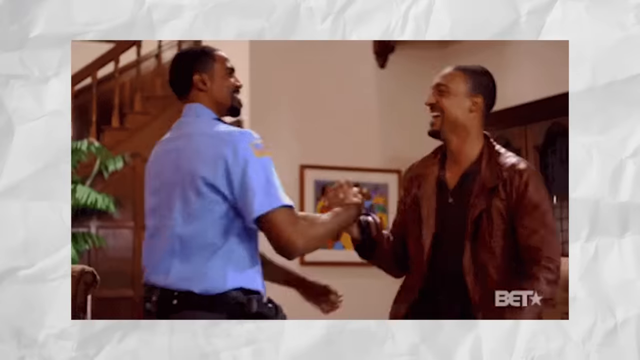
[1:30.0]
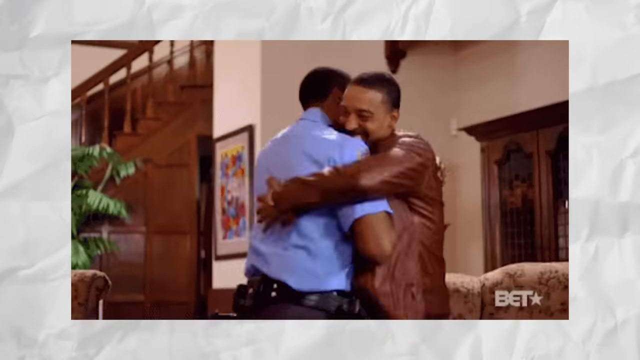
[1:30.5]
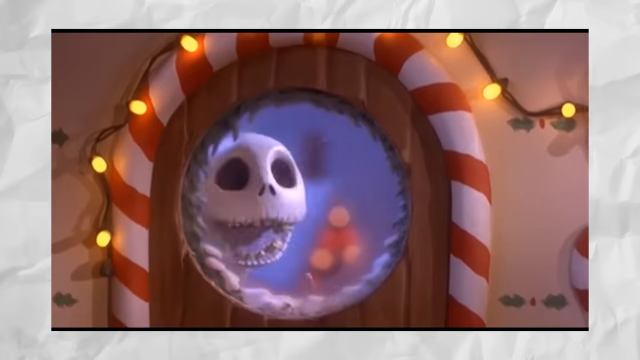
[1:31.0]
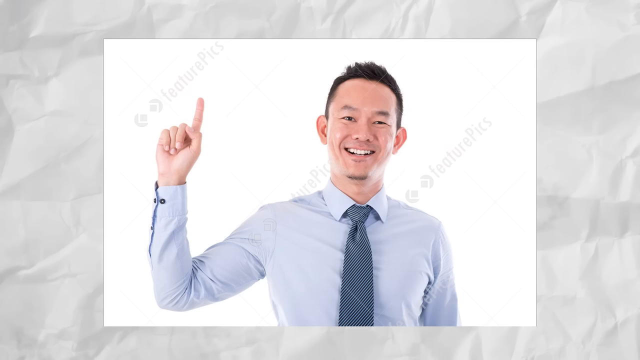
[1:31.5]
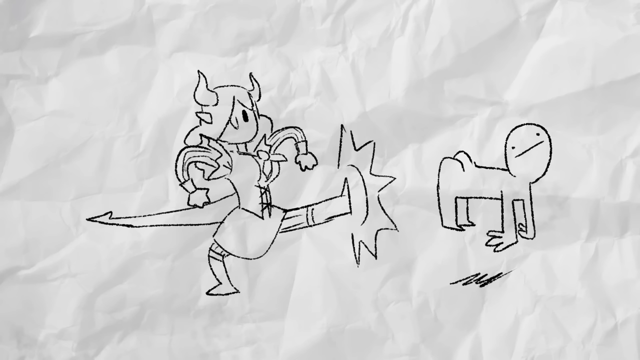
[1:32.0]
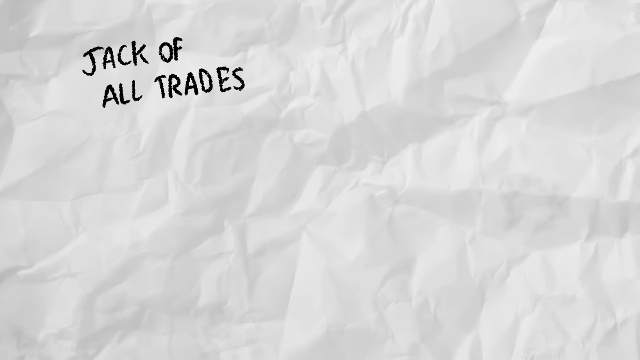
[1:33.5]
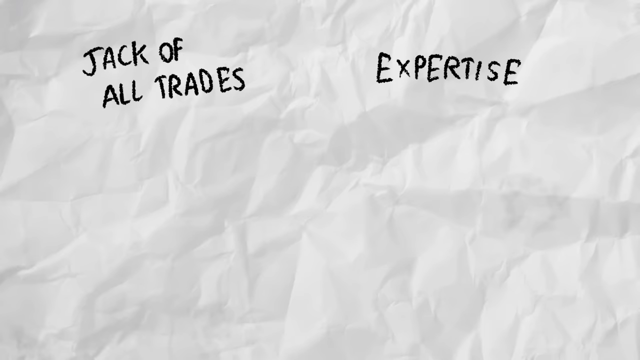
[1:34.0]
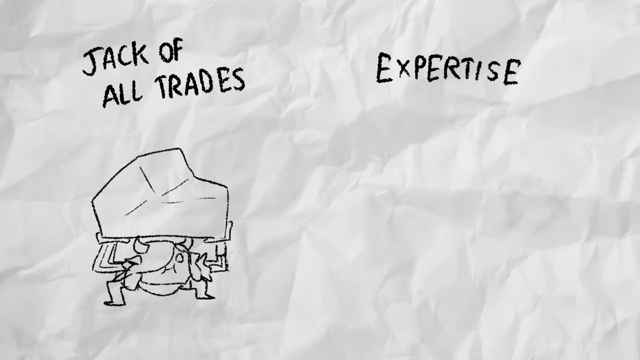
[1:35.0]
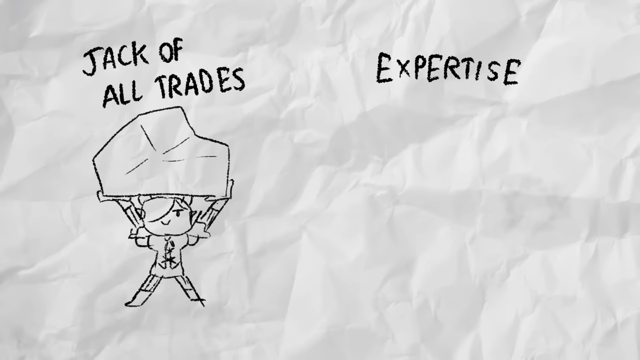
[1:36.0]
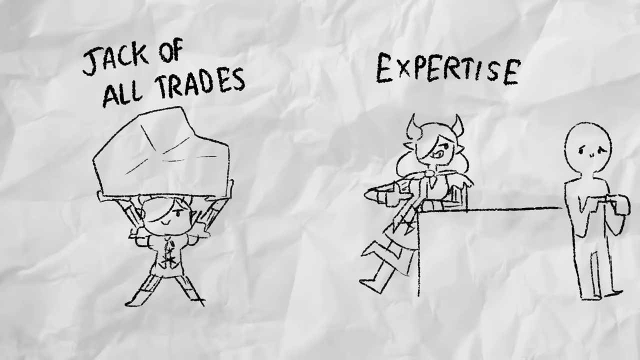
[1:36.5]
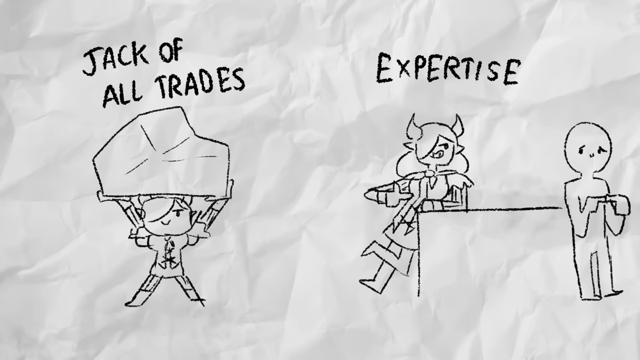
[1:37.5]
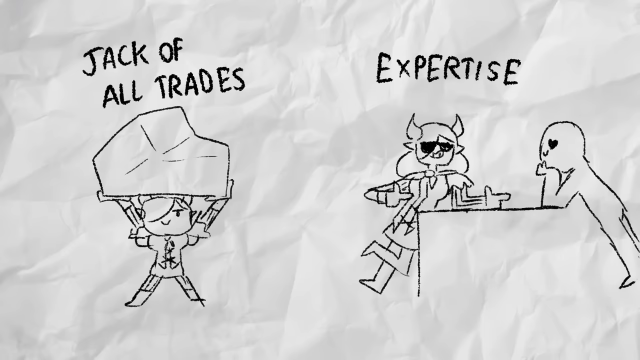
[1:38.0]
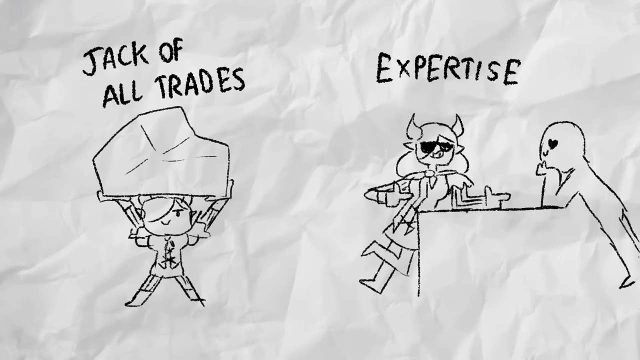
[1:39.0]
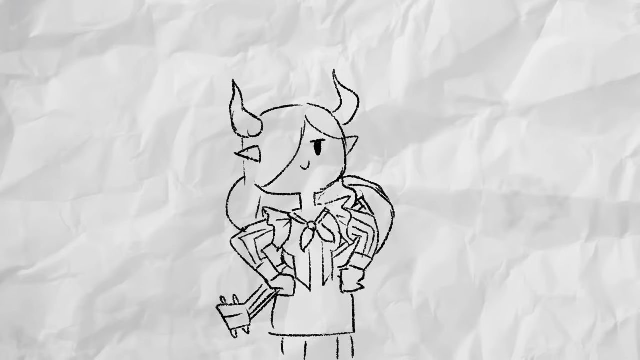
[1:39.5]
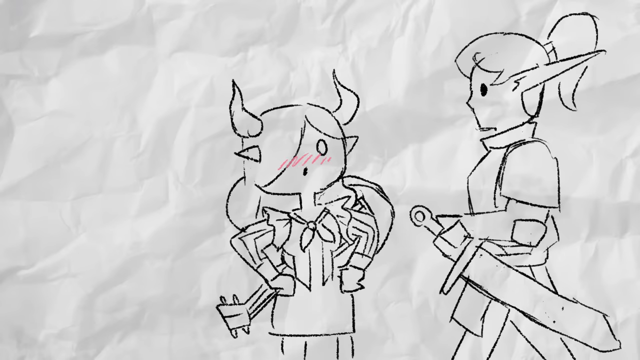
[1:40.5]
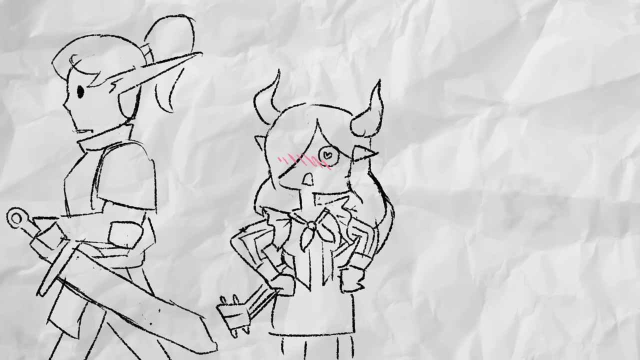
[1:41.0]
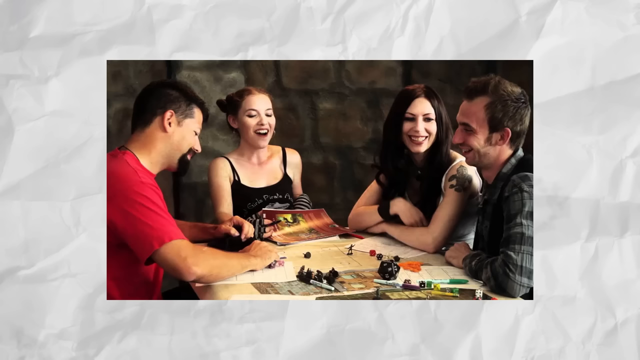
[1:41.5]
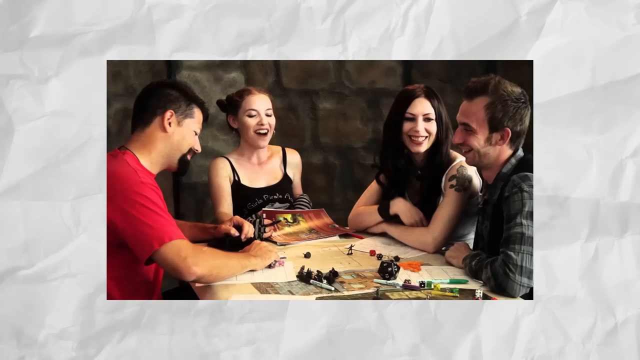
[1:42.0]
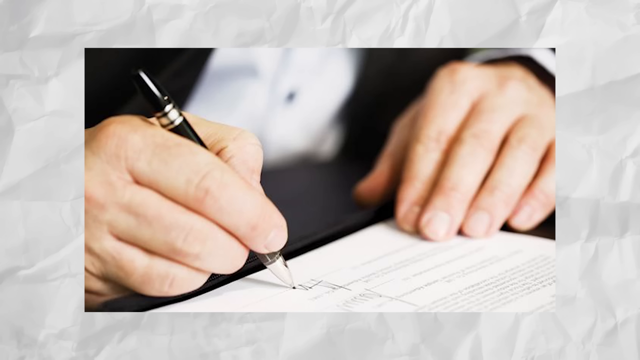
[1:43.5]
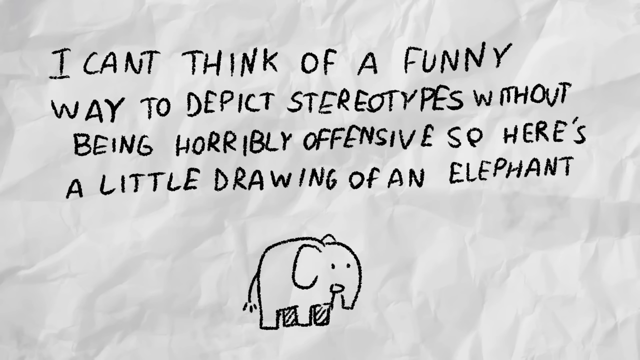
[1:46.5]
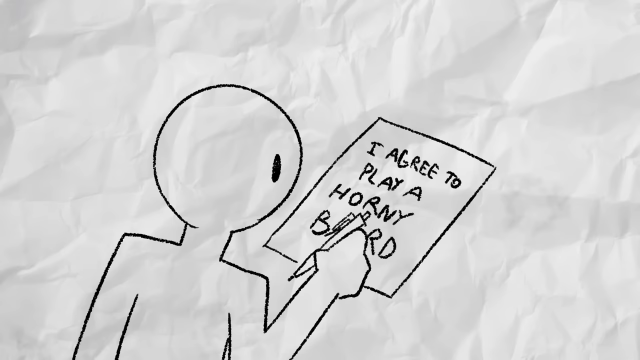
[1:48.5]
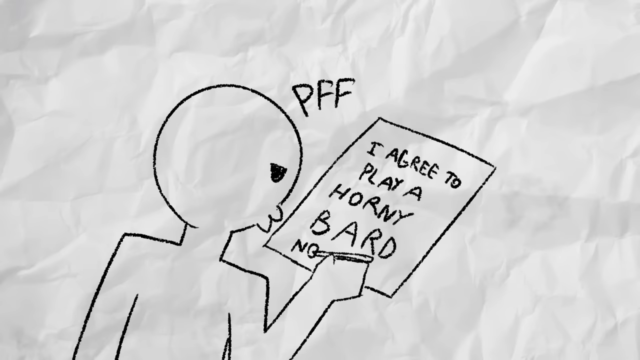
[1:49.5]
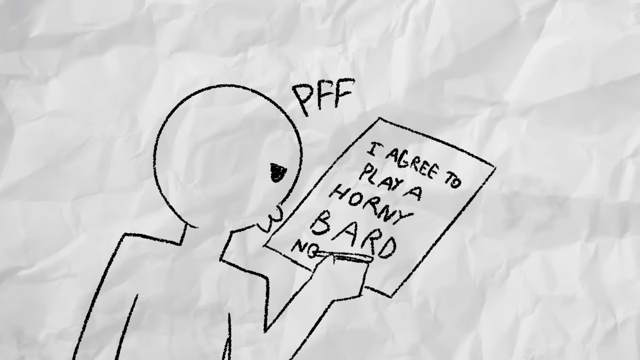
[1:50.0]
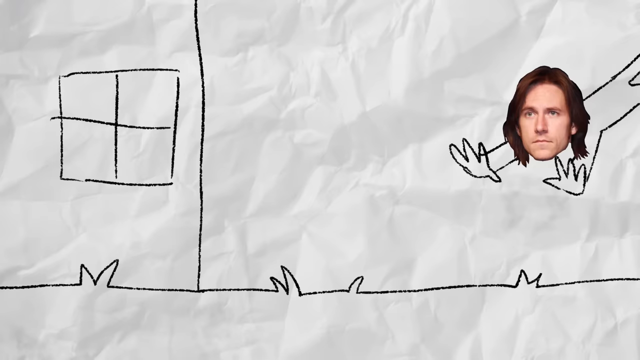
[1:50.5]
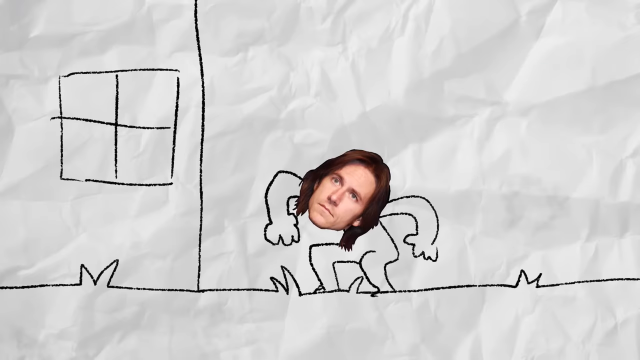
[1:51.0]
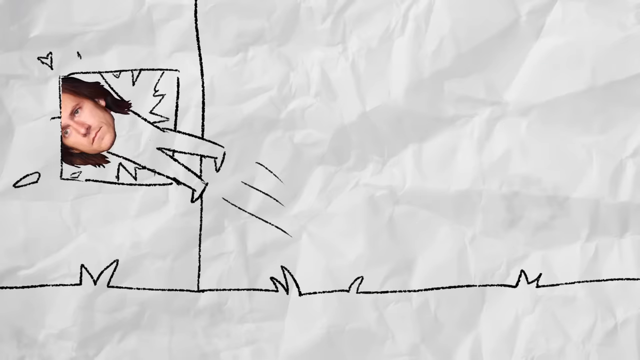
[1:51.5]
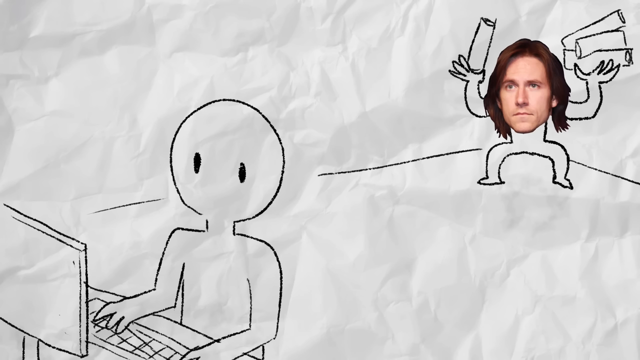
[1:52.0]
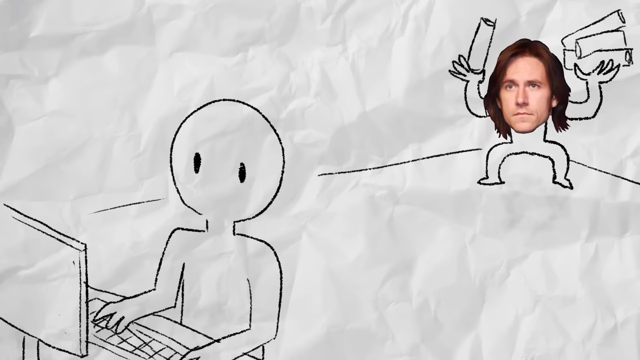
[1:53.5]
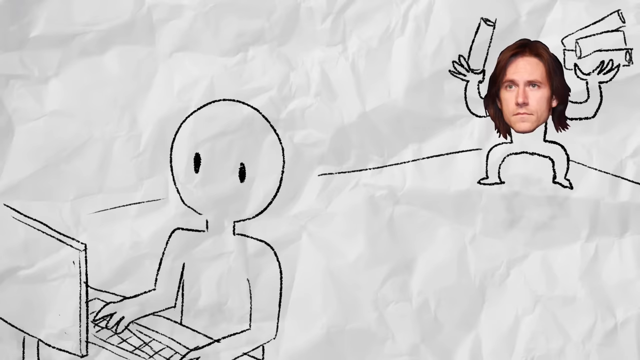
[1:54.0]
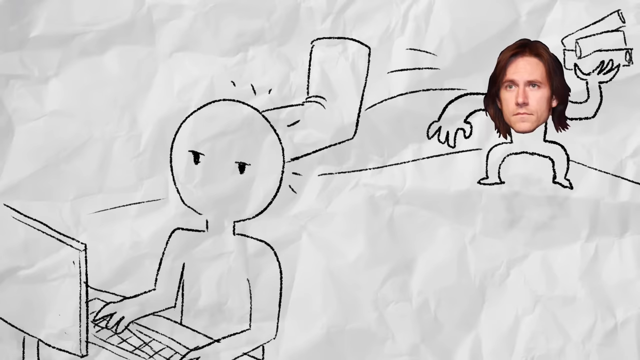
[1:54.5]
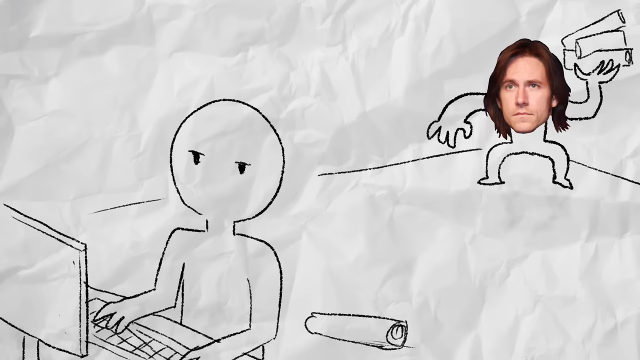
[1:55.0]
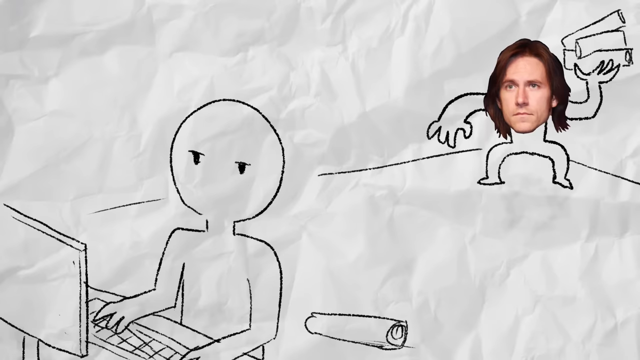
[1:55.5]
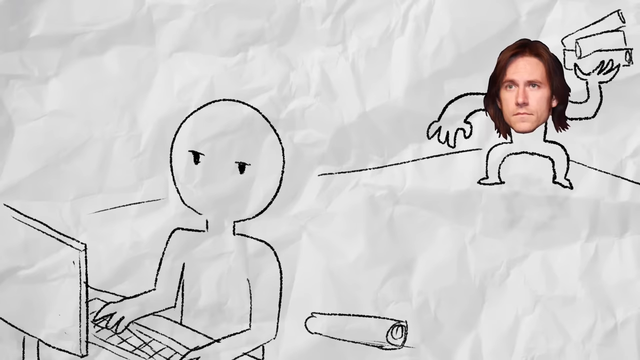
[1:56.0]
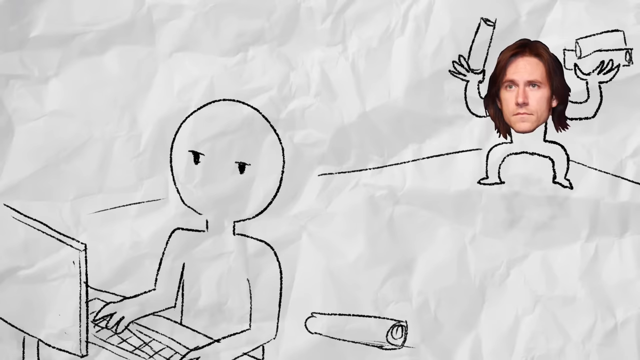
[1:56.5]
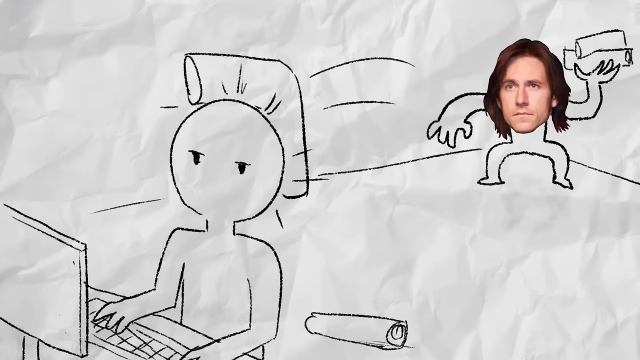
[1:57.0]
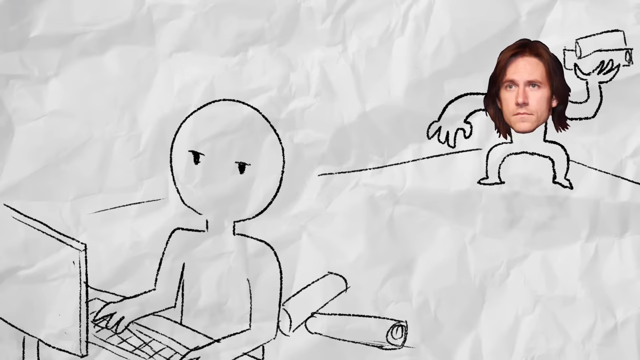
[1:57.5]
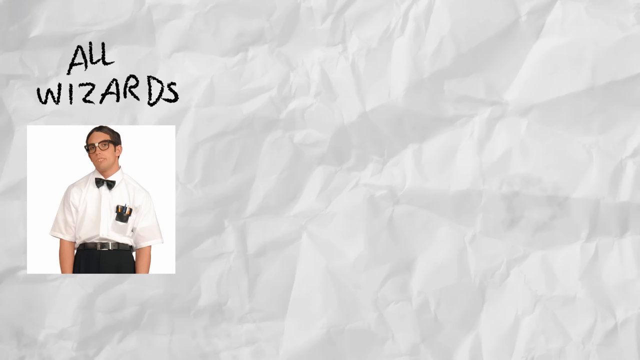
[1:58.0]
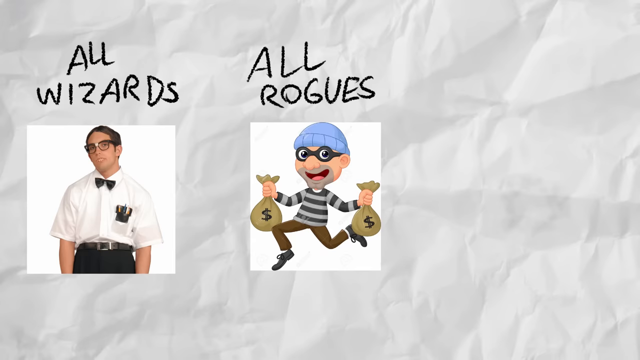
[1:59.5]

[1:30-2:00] An image over a white crumpled paper background shows two black men shaking hands, one who looks like he is in a police uniform and one on the right wearing a brown leather jacket, with the BET logo in the corner; the two men hug. Next comes a scene from the movie A Nightmare Before Christmas: Jack Skellington looks through a foggy window, and a door with a rounded top has a red and white striped border and Christmas lights over the top. Then a businessman in a blue dress shirt and blue tie, with short black hair and a smile, points his right finger in the air. The scene quickly returns to the white crumpled paper background, where a drawn girl with devil horns and a devil tail has her arms out to the side and her foot in the air, as if she has just kicked a drawn figure on the right, who is on his hands and knees without a smile. Next, a drawing with text reads "Jack of all trades" in the upper left and "expertise" on the right, in black chalkboard-style font. In the bottom left, a girl holds a large rock above her head. On the right, the half-girl, half-devil leans against a table, and to the right a figure leans against a table with his fingers pointed at each other. Then the half-girl, half-devil, now wearing sunglasses, points at the figure to her right, who now has hearts for eyes and his hands under his chin. Next, the girl with devil horns has her hands on her hips and a ukulele behind her back. She becomes embarrassed, with a pink hue across her nose, as a tall drawn figure with a large sword, a ponytail and large spiked ears appears on the right and walks across the frame from right to left, and she follows the figure with her eyes. Next is an image, over the white crumpled paper background, of four people playing Dungeons and Dragons at a table: a man in a red shirt on the left, a woman with orange hair to his right smiling and gazing toward the table, another woman with a shoulder tattoo and long black hair smiling at the man to her right, who wears a plaid shirt. Then two white hands appear, one holding a pen and signing a piece of paper. Next, a drawn elephant is at the bottom, with black chalkboard-style text above reading "I can't think of a funny way to depict stereotypes without being horribly offensive, so here's a little drawing of an elephant." Then the back of a drawn figure, with one eye shown, holds a pen over a paper that reads "I agree to play a horny bard"; in the animation he purses his lips and the text "PFF" appears above his head. In an animated scene, a drawn figure with a pasted real human face does a somersault from right to left on the grass toward a window drawn on the left, then jumps through the window and breaks it, with glass flying through the air. Next the same figure with the pasted real face is in the upper right holding several cylinders, and on the left a figure with two eyes and no mouth or nose sits at a computer against the white crumpled paper background; the man throws two cylinders at the back of the computer figure's head. Finally, an image of a nerdy-looking guy on the left has the text "All Wizards" above him, and to the right an image of a burglar holding two money sacks has "all rogues" above him in the black chalkboard-like font.